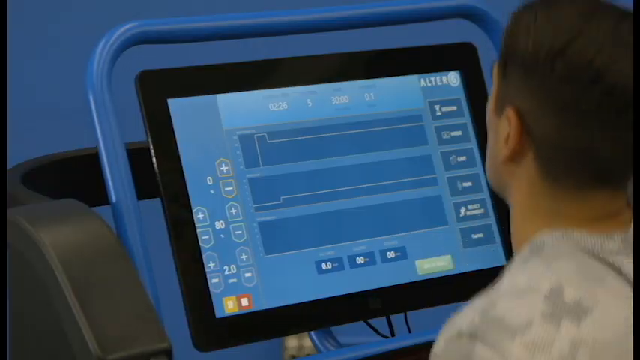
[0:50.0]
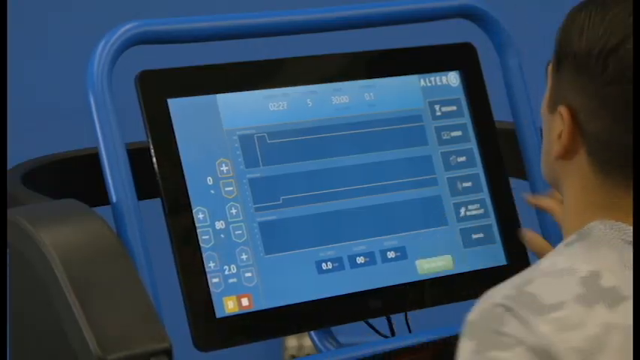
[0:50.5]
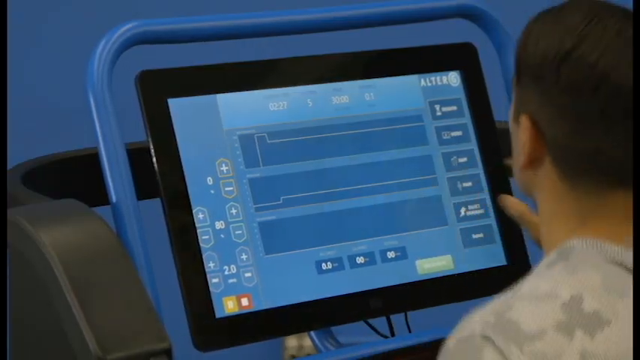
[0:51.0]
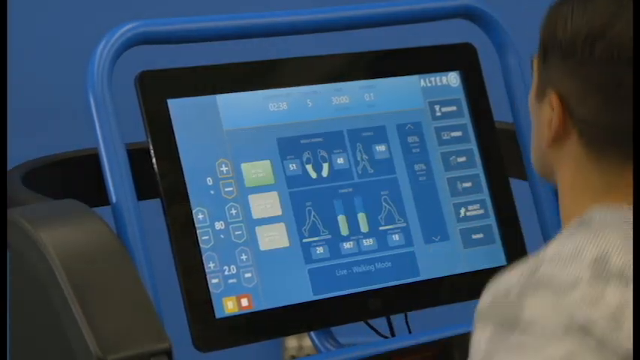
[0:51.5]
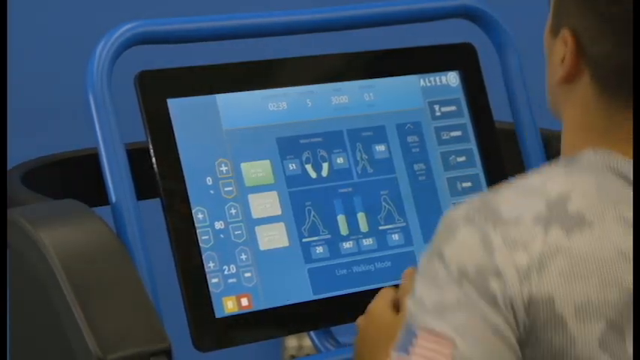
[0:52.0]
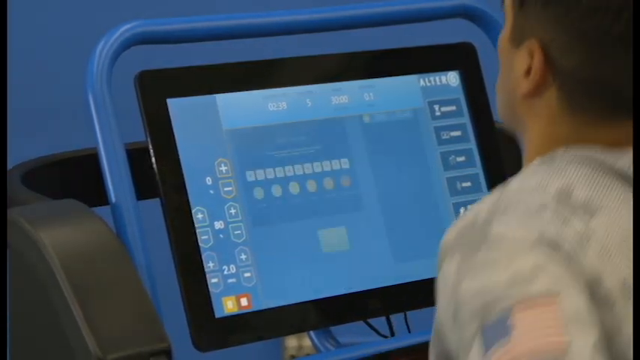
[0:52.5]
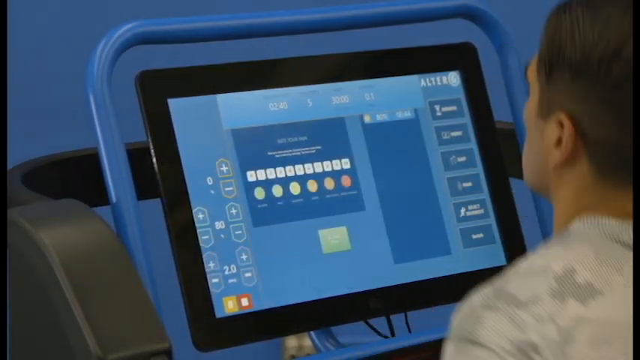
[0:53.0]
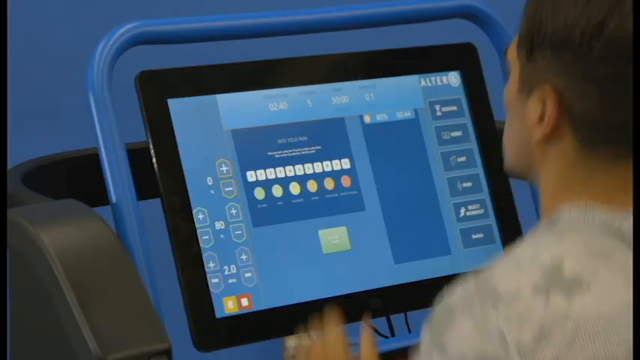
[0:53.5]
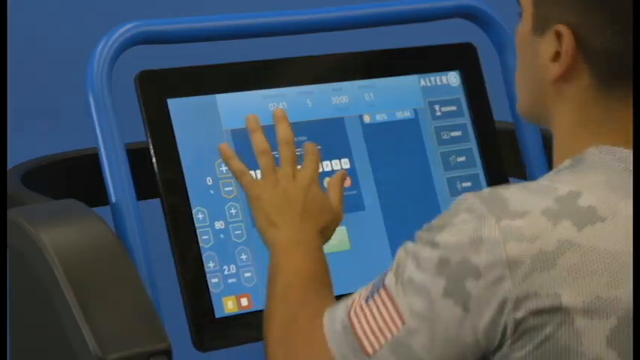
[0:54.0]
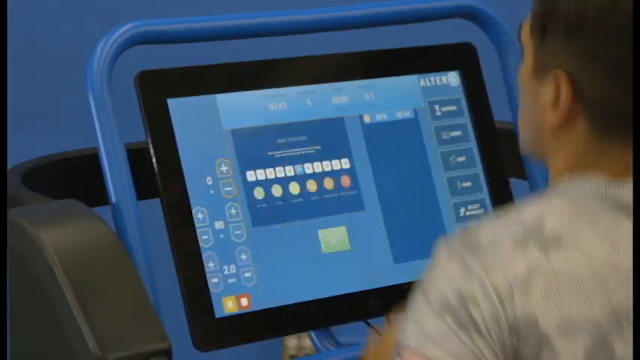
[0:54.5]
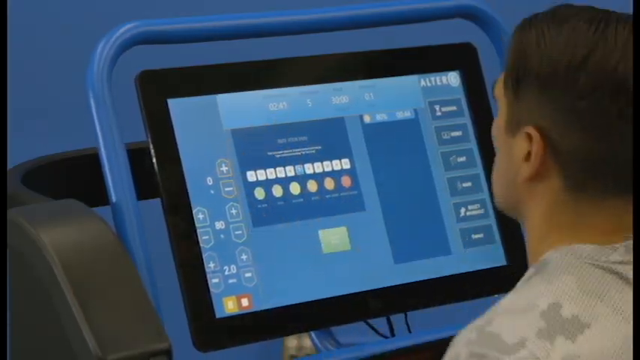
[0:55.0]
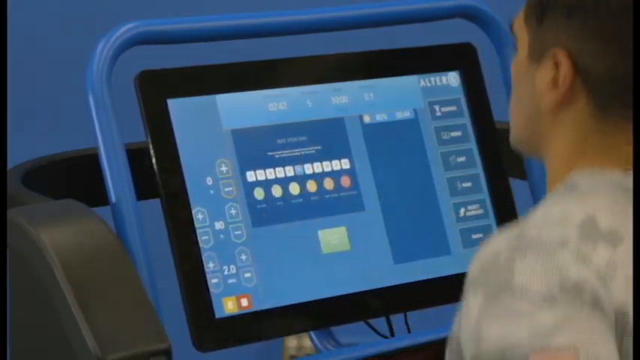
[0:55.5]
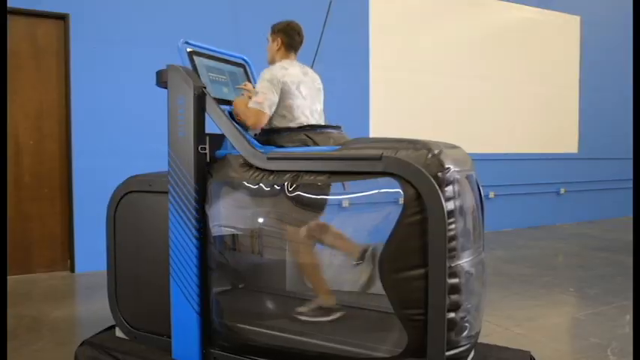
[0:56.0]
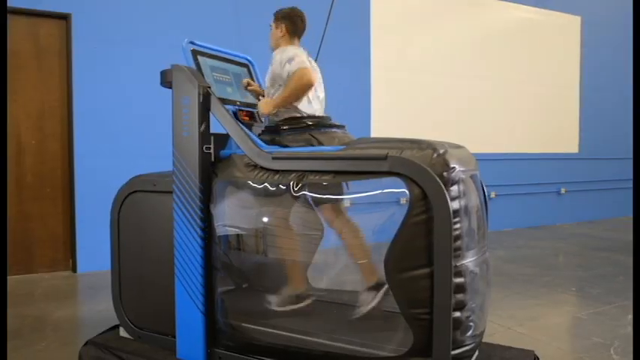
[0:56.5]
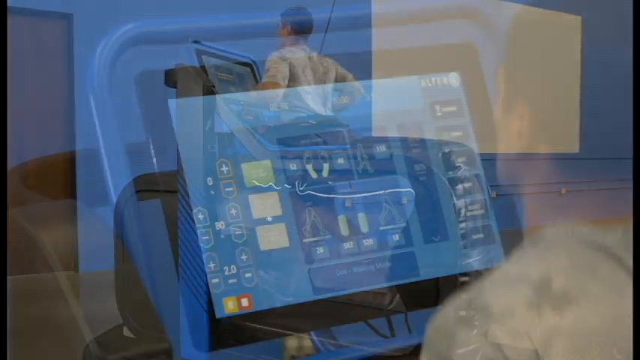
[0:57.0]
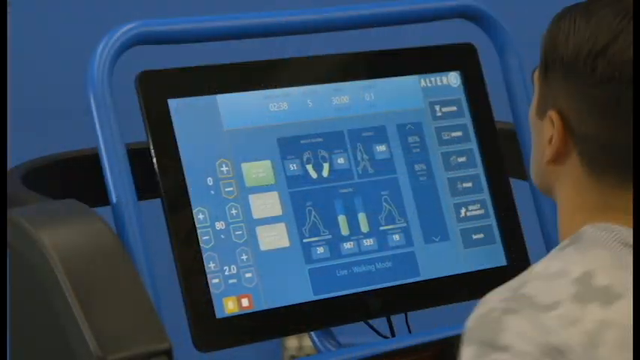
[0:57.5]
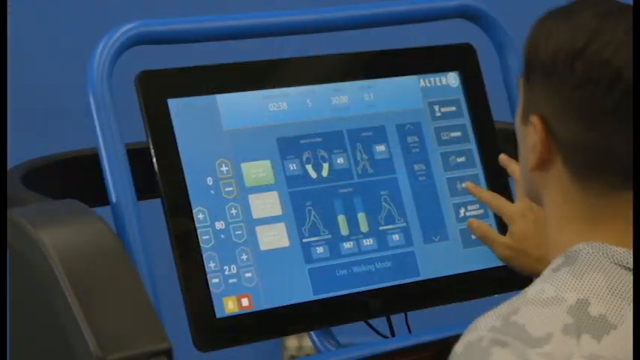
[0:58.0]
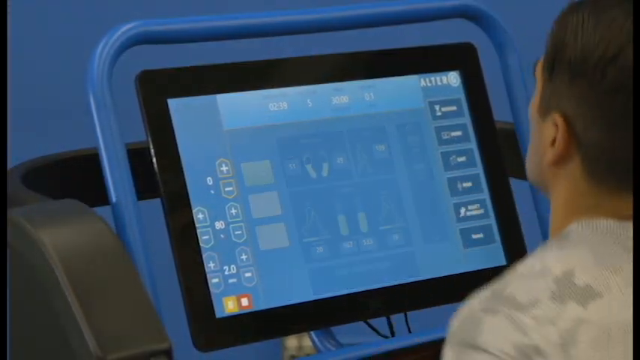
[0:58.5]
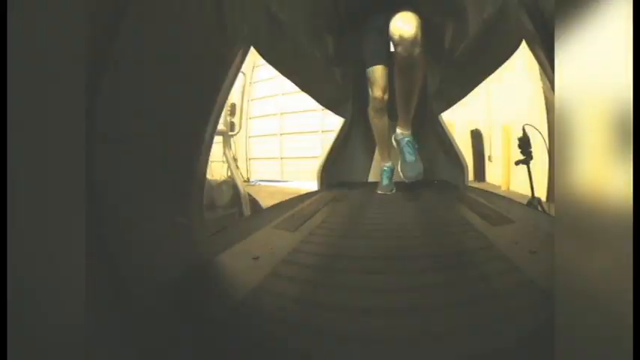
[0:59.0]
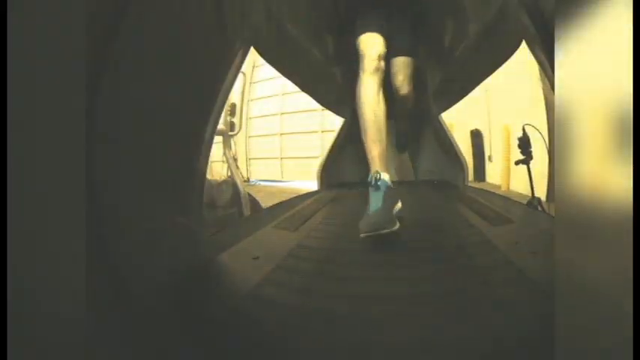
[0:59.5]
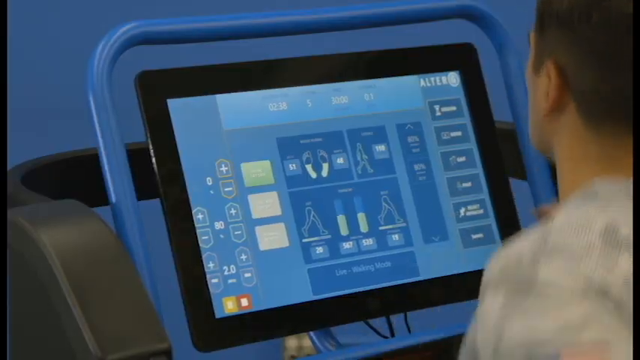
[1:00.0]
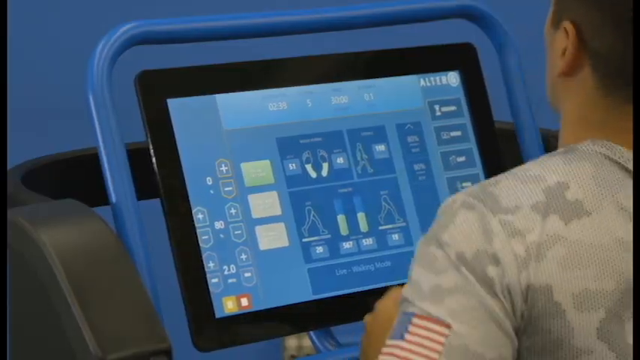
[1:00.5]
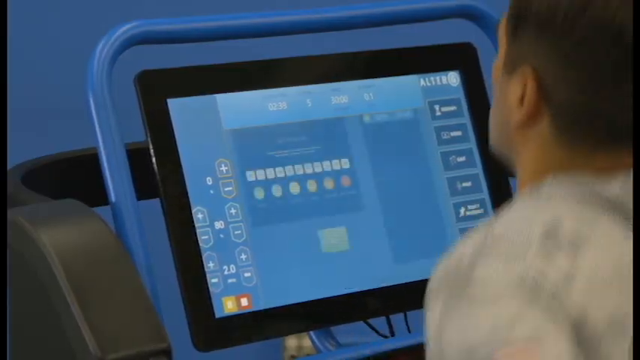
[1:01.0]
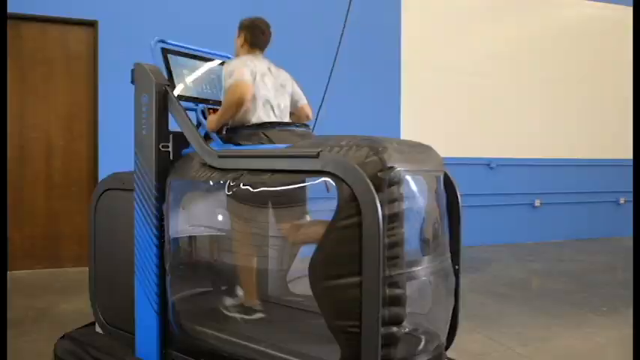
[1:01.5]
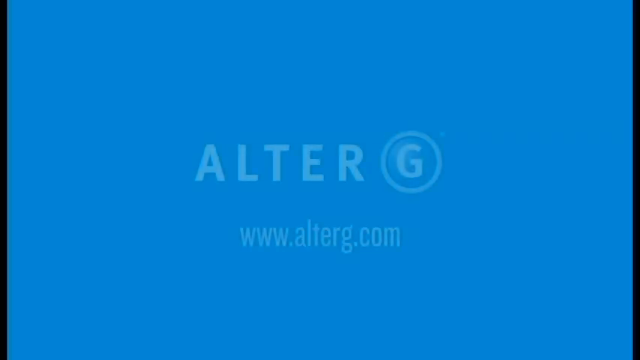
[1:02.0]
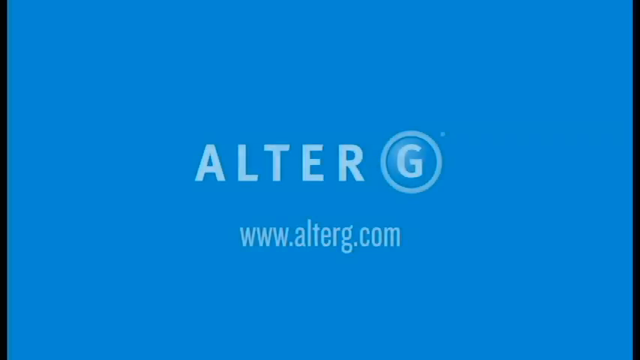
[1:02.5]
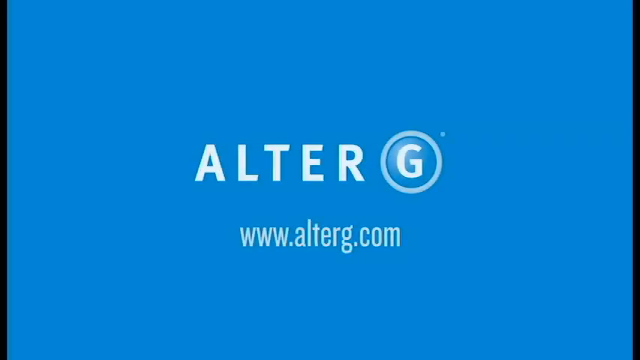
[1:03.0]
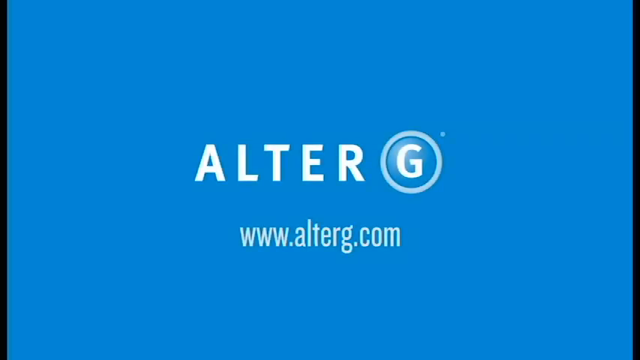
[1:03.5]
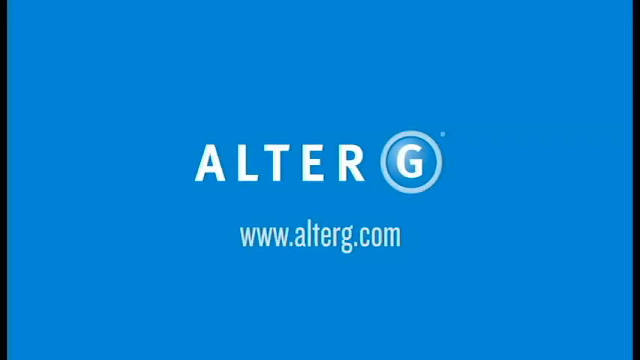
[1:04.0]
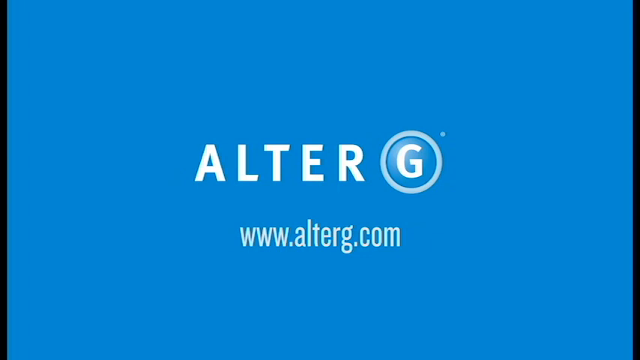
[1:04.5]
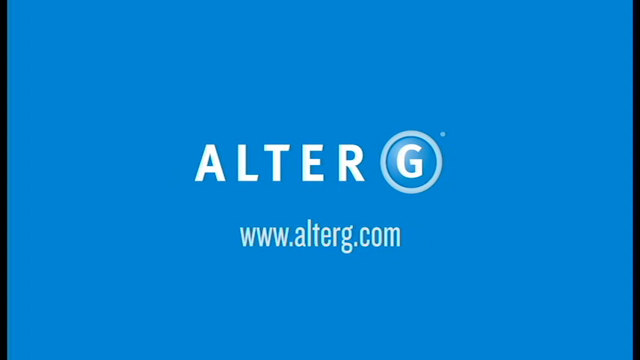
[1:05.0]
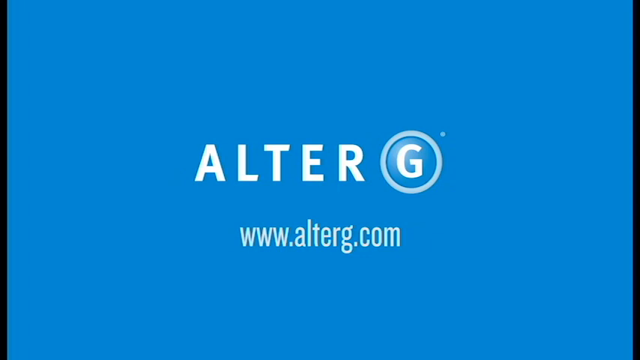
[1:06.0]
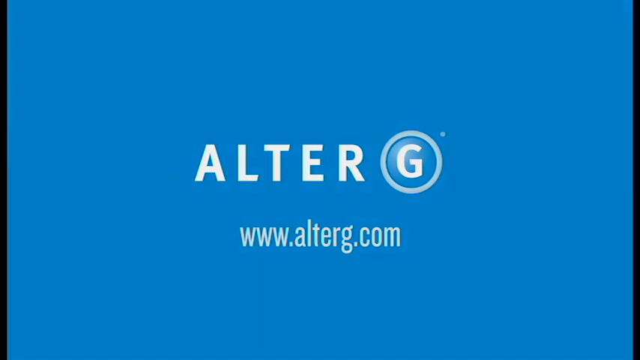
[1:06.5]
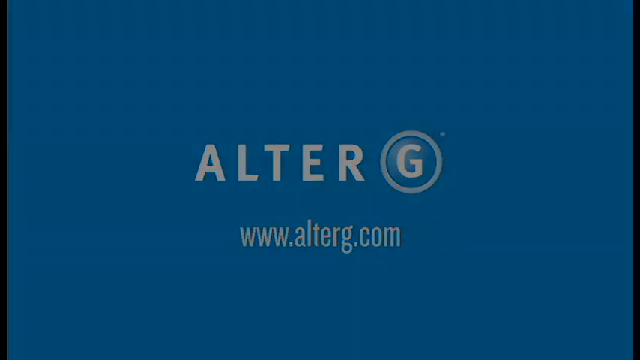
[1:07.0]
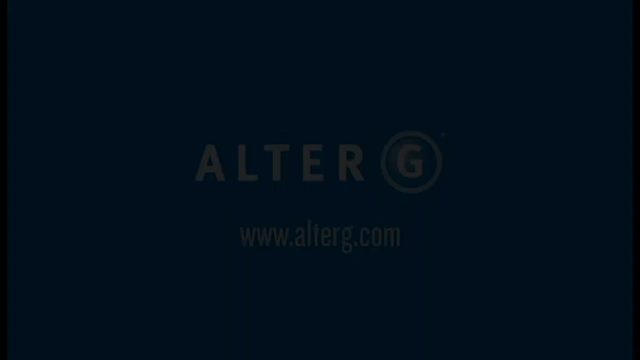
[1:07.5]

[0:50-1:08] A man runs on a treadmill, seen from behind. The treadmill is larger than a standard gym treadmill and has a widescreen LCD monitor. The view is zoomed in closely, showing the screen in full, with the man running on the spot on the right side of the frame and using his left hand to reach up and touch the LCD screen. The man is then seen from further back and from the side, running stationary in a treadmill that has a covering from the waist down. The video transitions between a floor-level, face-on view of the man's legs running on the treadmill and a zoomed-in view of the LCD screen, which the man touches with his right hand. The outro ends on a blue screen with a company logo for AlterG and the web address "www.alterg.com," which fades out to a black screen.